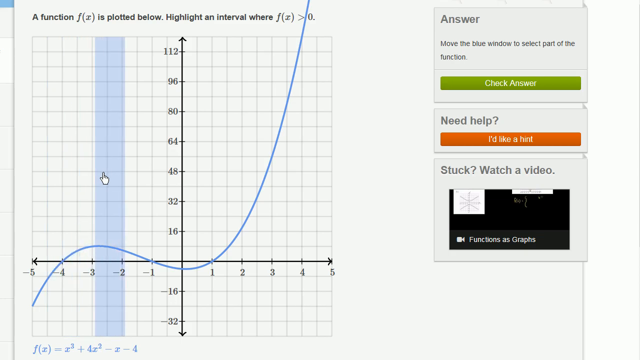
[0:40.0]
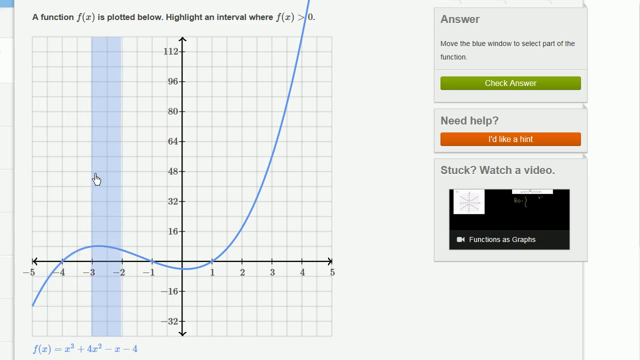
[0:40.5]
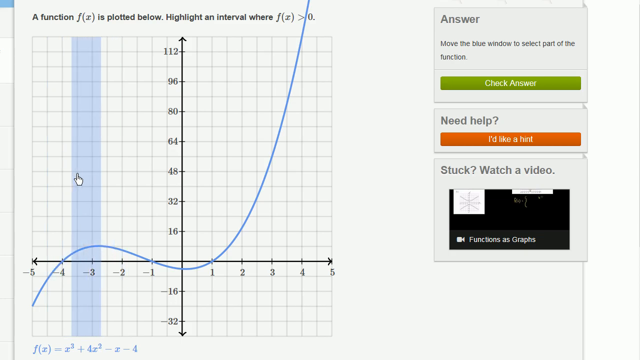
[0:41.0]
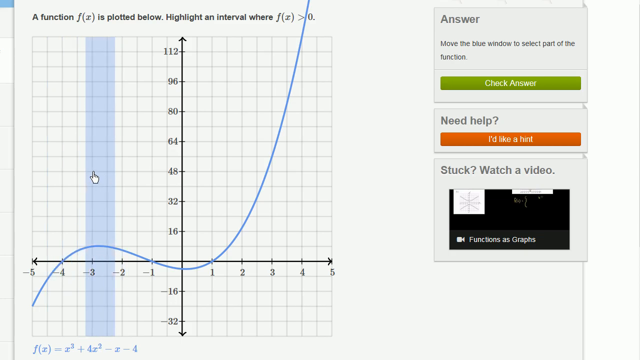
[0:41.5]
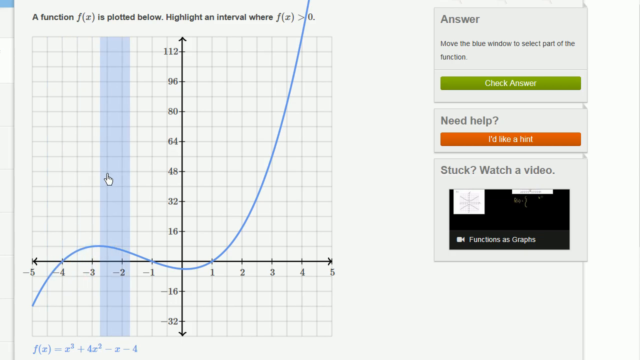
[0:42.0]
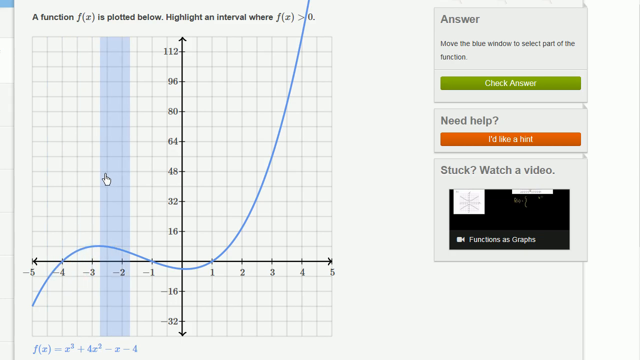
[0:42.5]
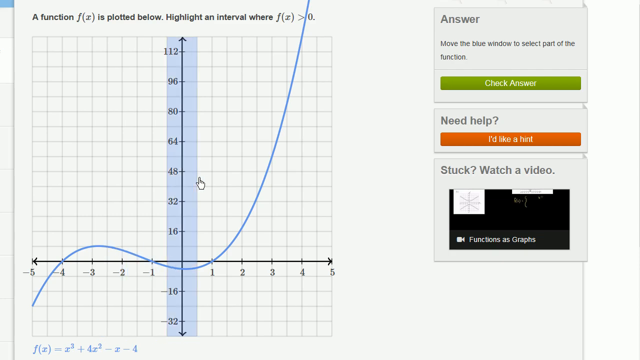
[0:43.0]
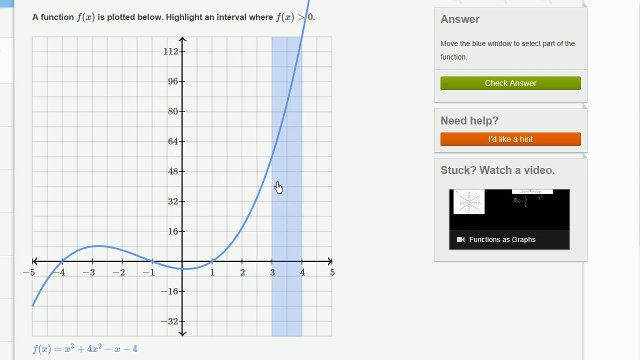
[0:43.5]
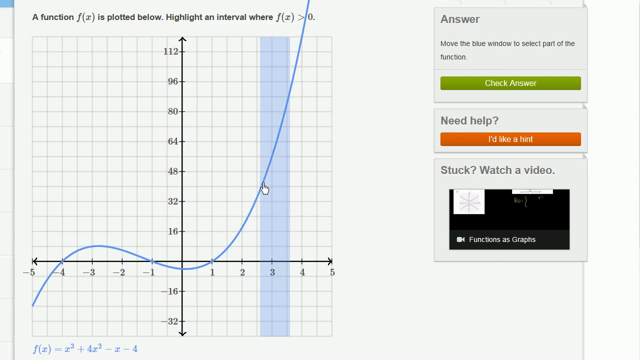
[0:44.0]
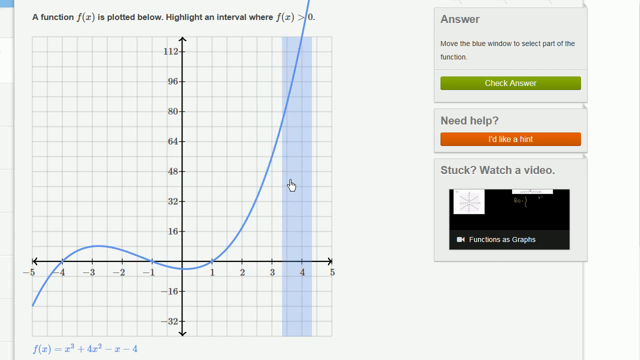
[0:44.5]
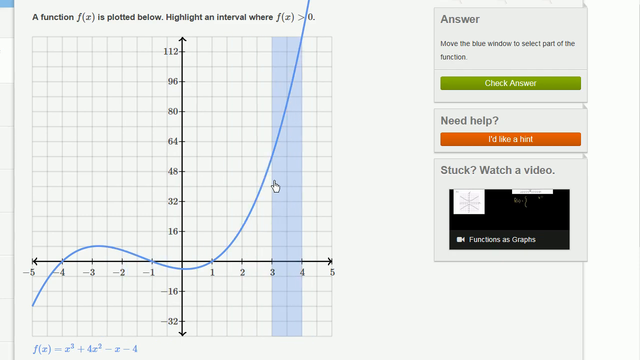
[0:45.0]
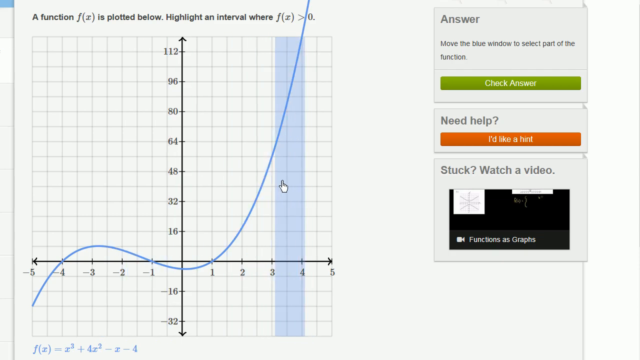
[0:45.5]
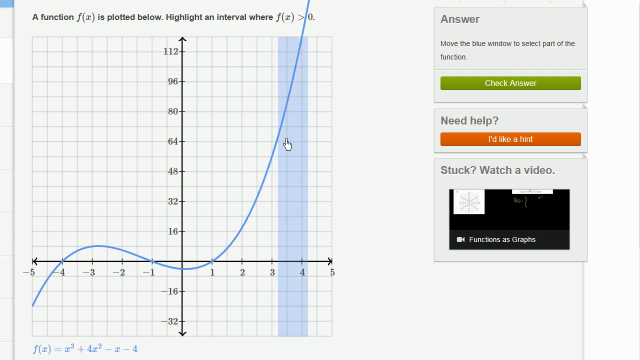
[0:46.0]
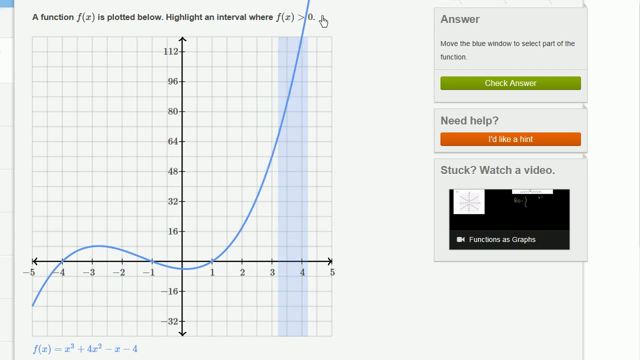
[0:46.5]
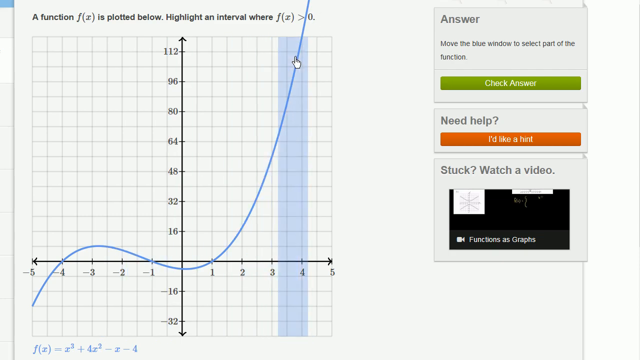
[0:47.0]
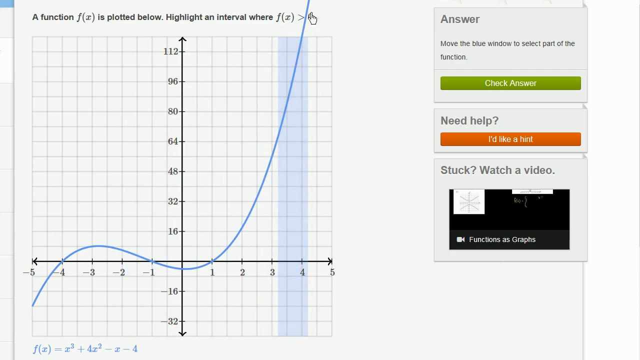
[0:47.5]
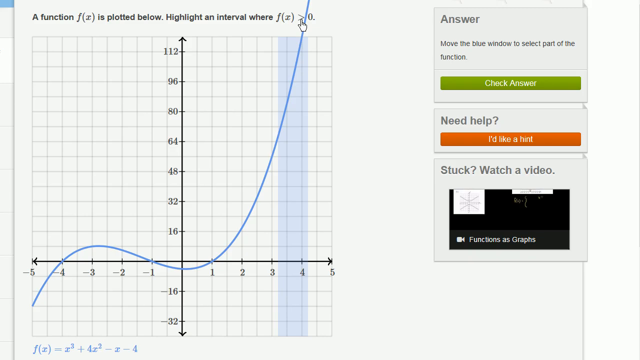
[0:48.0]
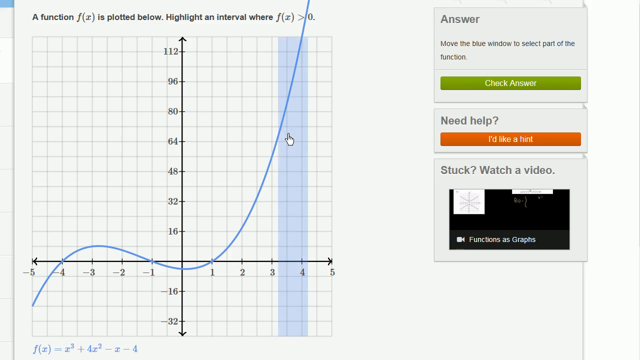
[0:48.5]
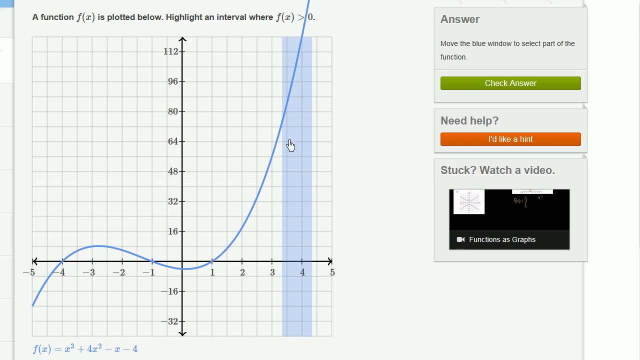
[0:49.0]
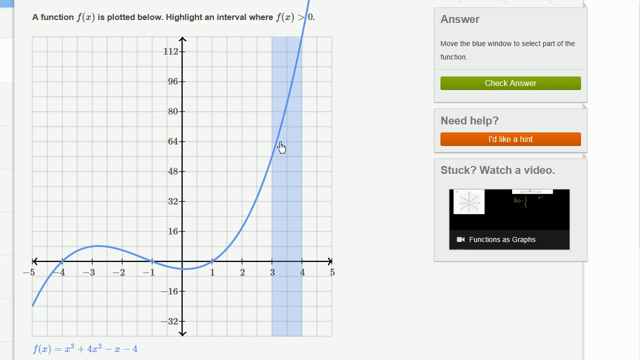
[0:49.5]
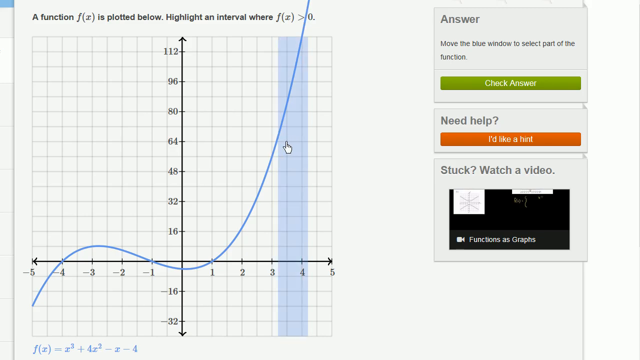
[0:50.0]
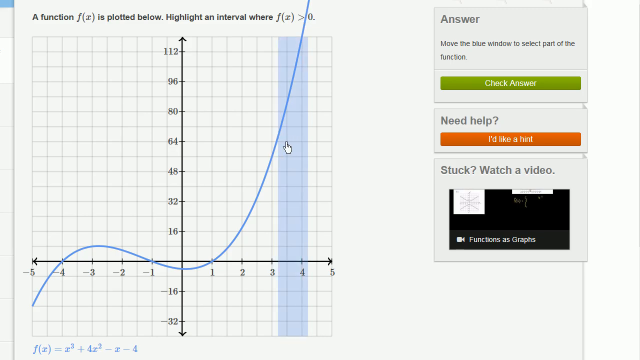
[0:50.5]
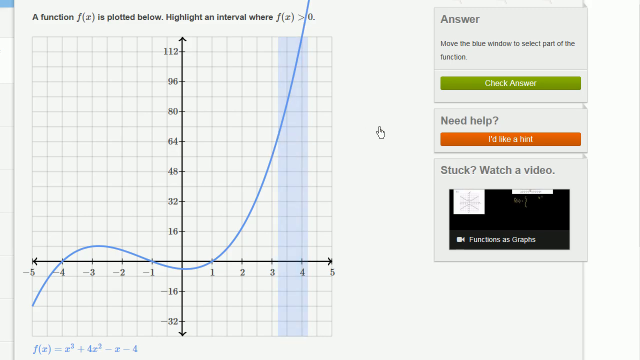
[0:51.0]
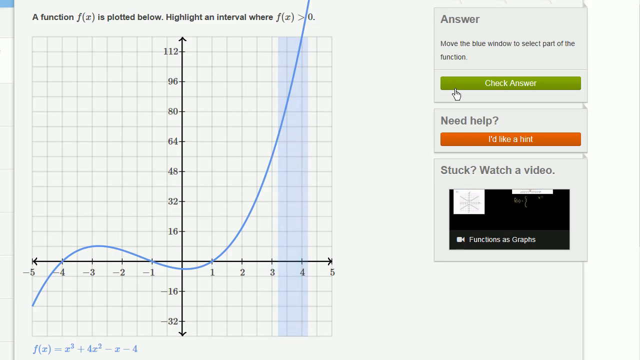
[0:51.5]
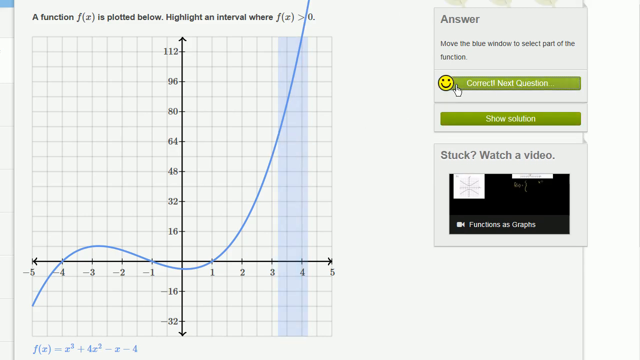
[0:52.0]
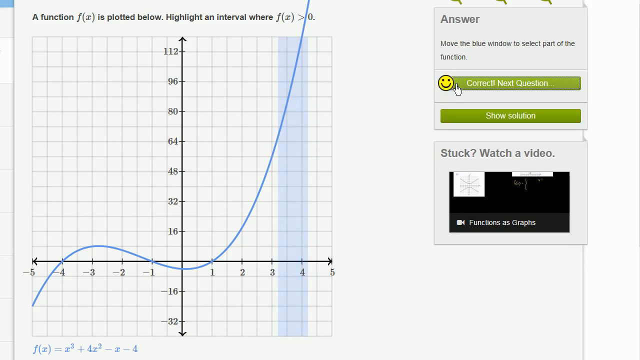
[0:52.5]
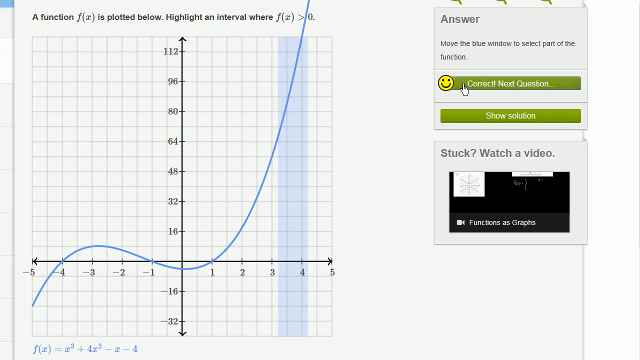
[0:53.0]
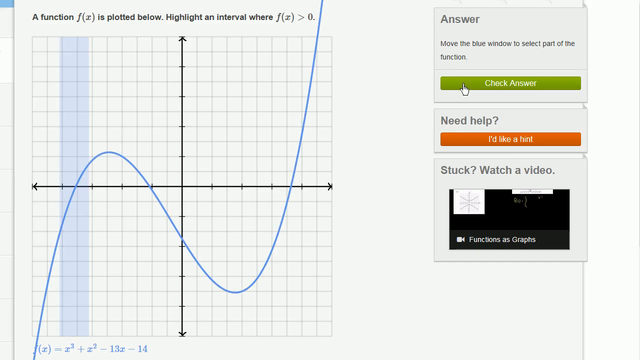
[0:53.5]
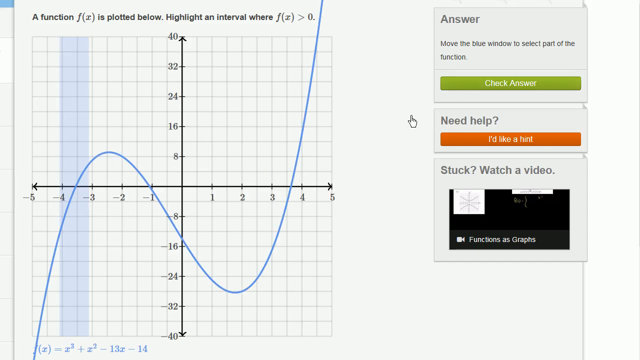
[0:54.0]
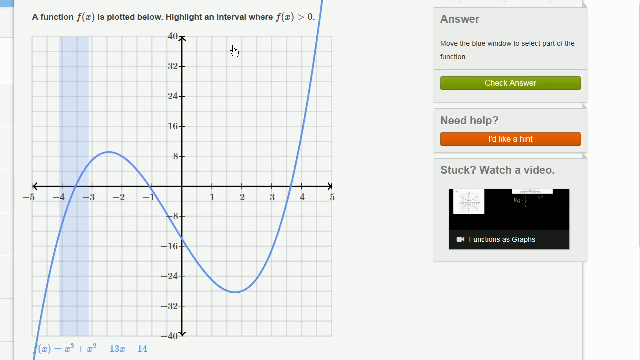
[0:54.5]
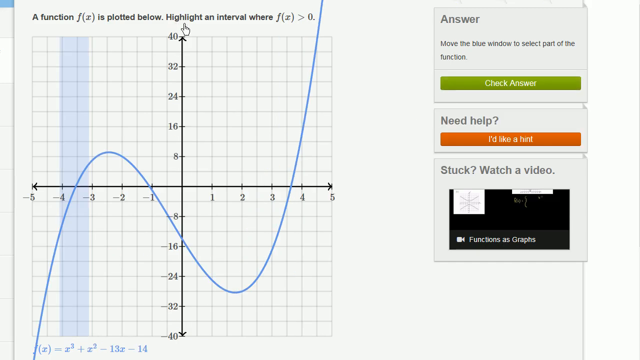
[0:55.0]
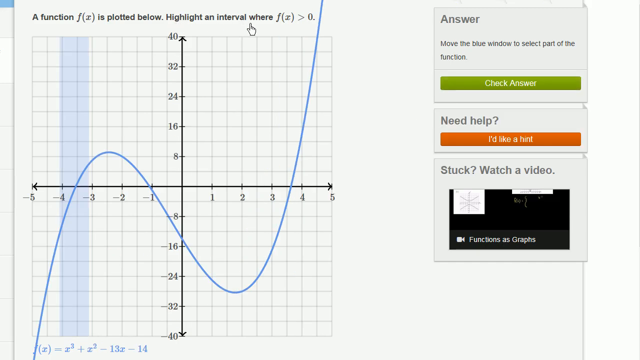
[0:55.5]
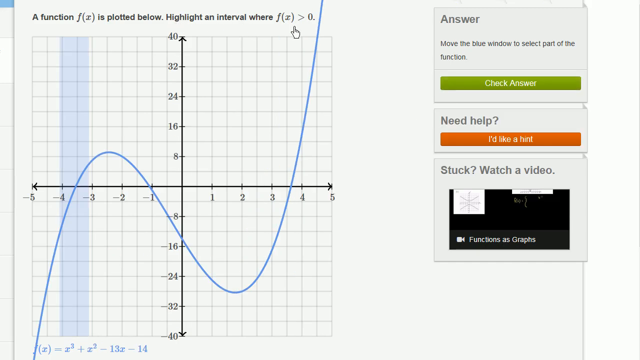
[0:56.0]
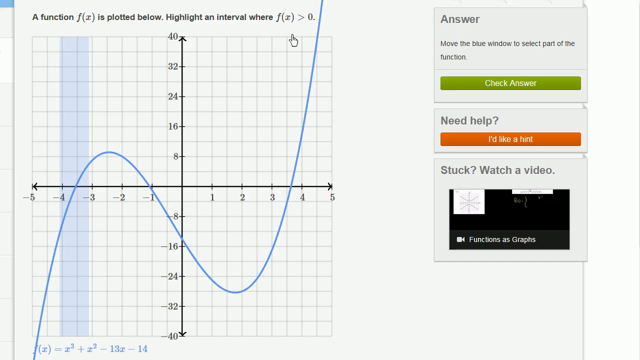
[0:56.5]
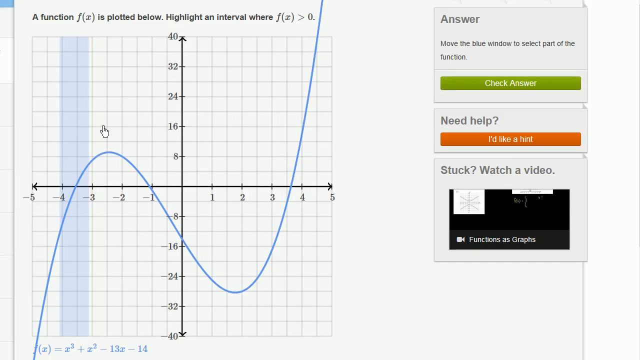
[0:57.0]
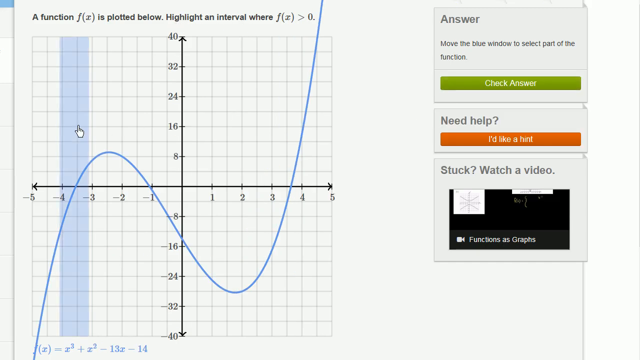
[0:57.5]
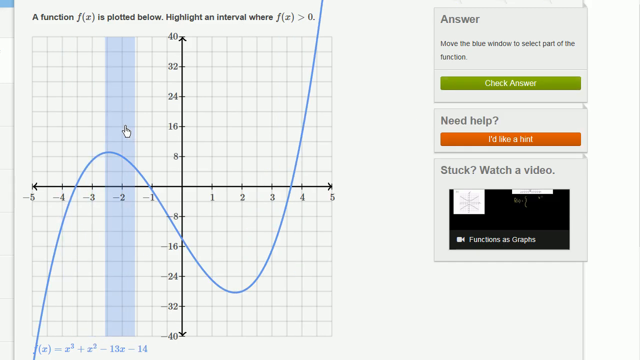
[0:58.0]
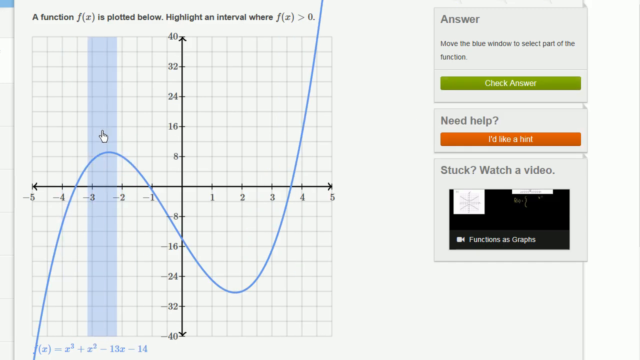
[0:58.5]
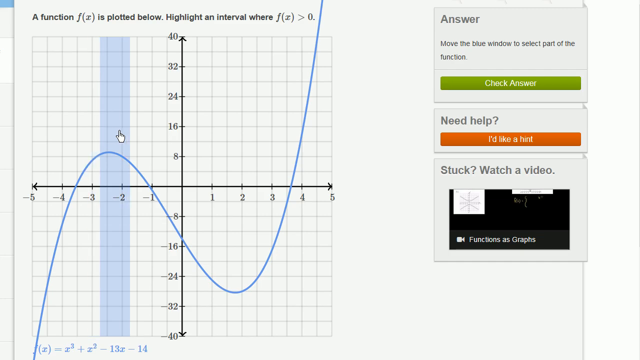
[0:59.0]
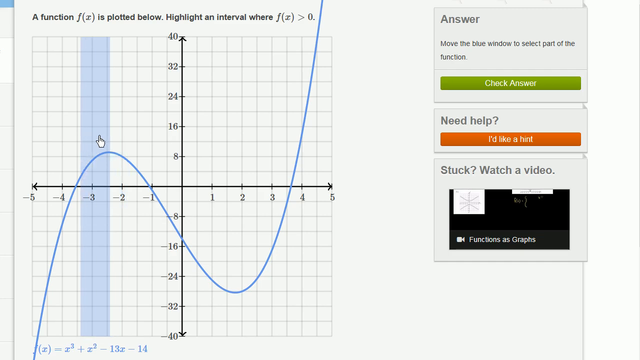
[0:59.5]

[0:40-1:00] The same cubic function is on screen, with the task of finding where f of x is greater than 0. The person uses the mouse to move the blue rectangular box left and right and clicks it, clicking the far left point, and then looks like they might click again on the right side, continuing to move it back and forth. Text reads "check answer," then "congratulations, you got it right." It could be a student doing practice problems or an instructor demonstrating. Next, another function appears with a little more curve: it increases up to a relative max, decreases for a little bit to a relative min, and increases the rest of the way out, like another x cubed function. The person moves the cursor back and forth with the rectangular box, and text reads "highlight the intervals where f of x is greater than zero."